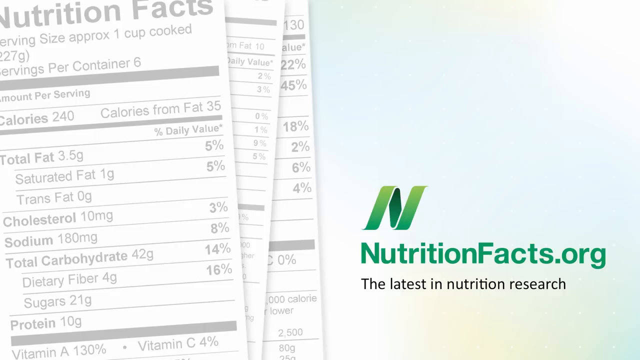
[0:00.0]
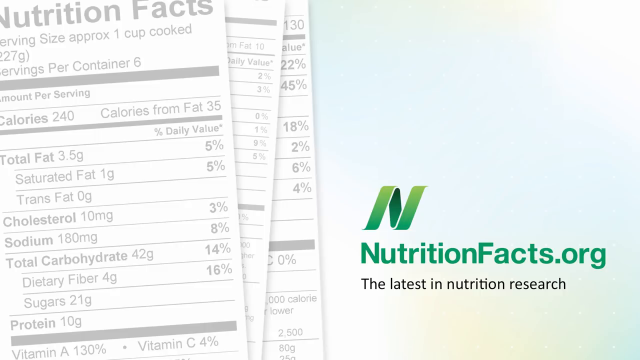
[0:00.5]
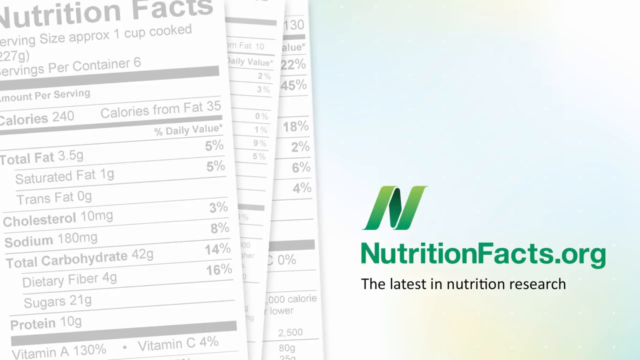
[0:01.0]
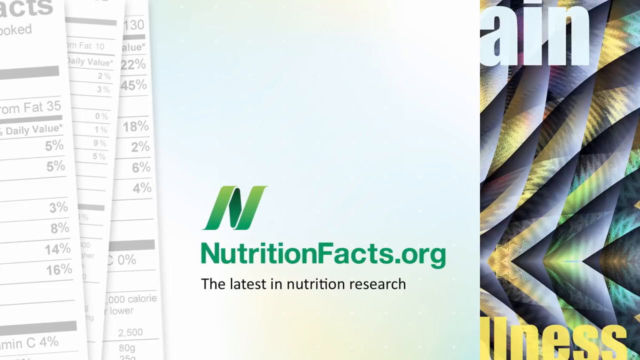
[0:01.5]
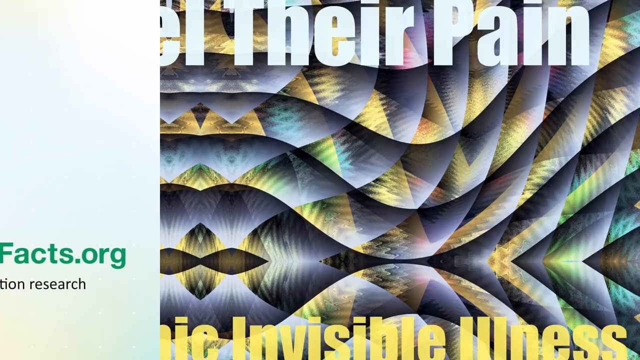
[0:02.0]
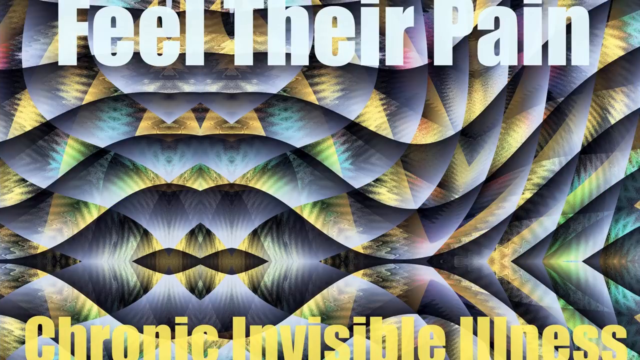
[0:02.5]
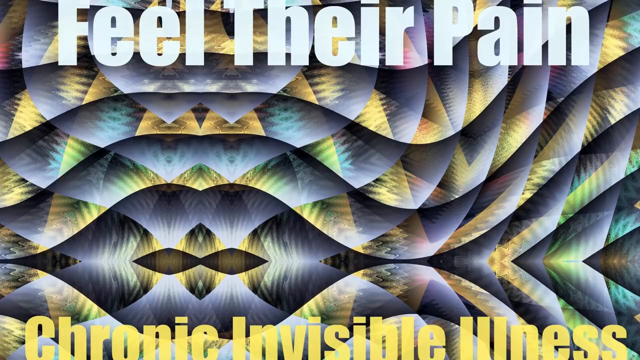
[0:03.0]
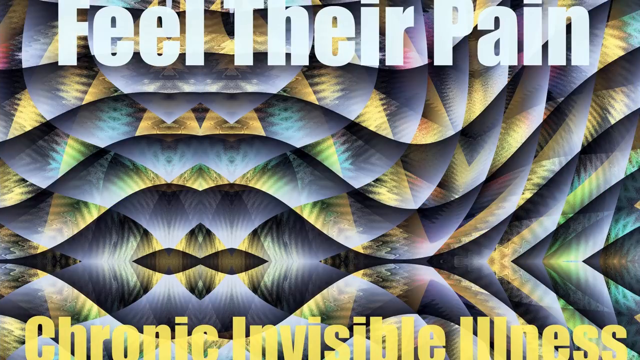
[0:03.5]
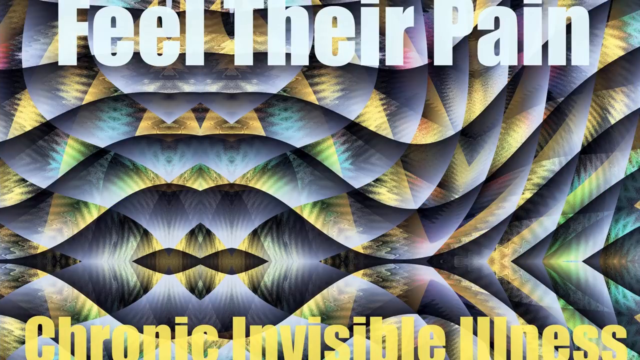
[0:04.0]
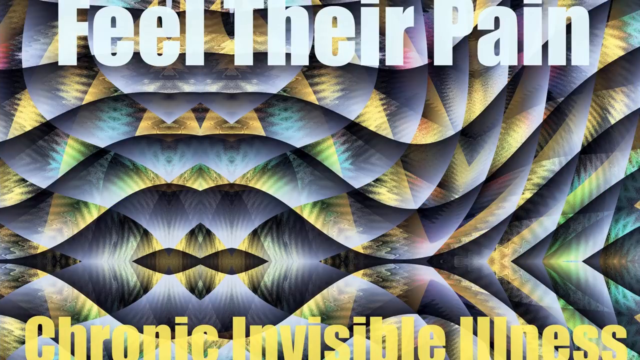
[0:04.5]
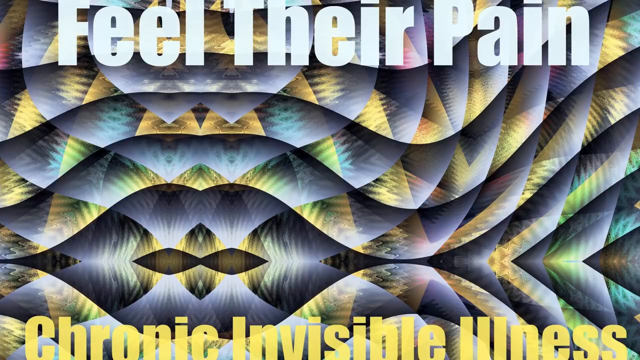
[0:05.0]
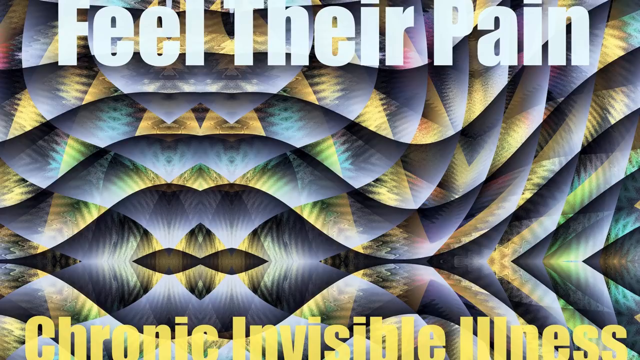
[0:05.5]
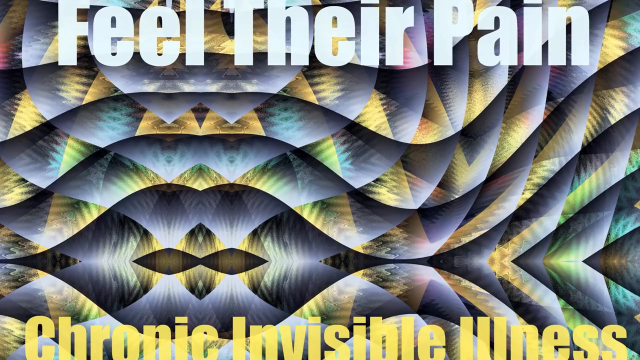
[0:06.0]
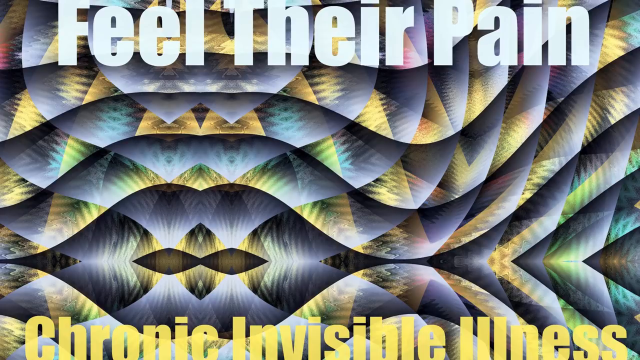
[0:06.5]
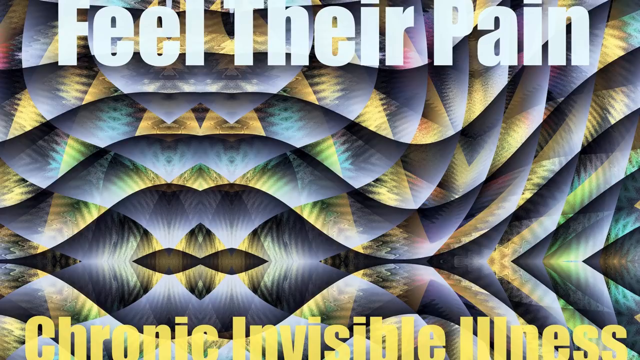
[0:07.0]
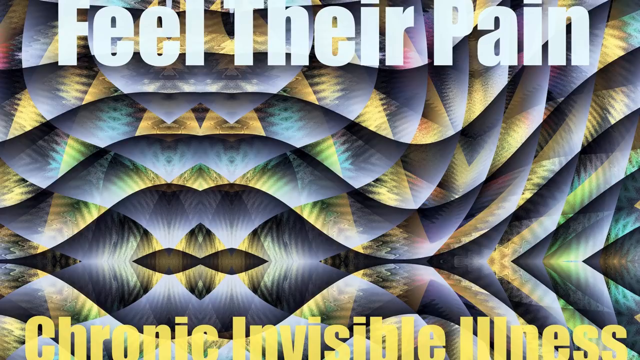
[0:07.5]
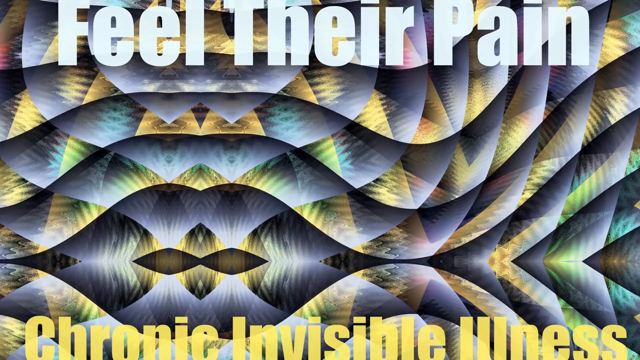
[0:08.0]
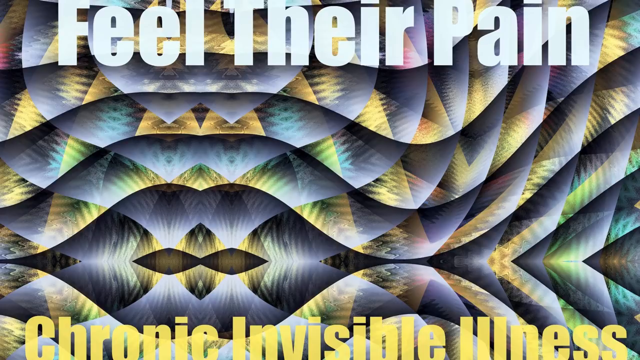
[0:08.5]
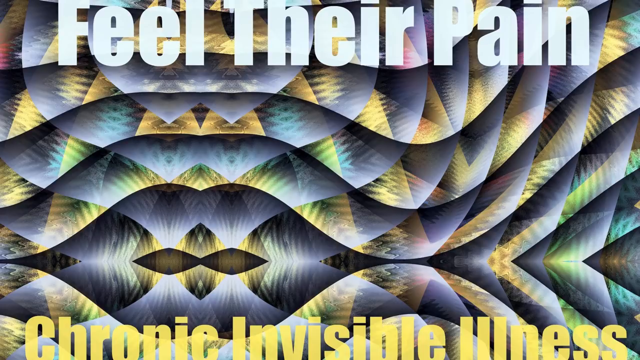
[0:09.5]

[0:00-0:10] A nutrition facts label fills the background; the main page is three-fourths visible, with two more pages slightly visible behind it on the right side. The label lists details such as calories, fat, cholesterol, sodium and carbohydrates. The right side of the background is a mix of very light blue and white, and the labels there have reduced opacity and are only slightly visible. At the bottom, "nutritionfacts.org" is written in green, with "latest in nutrition research" below it in black, aligned to the left; above this is a nutrition logo with a green letter N. The screen slides to the left, revealing the next screen: an abstract, colorful design in shades of blue, green, yellow, brown and black that looks like a series of waves. Over this pattern, "feel their pain" is written at the top and "chronic invisible illness" at the bottom in big bold letters.